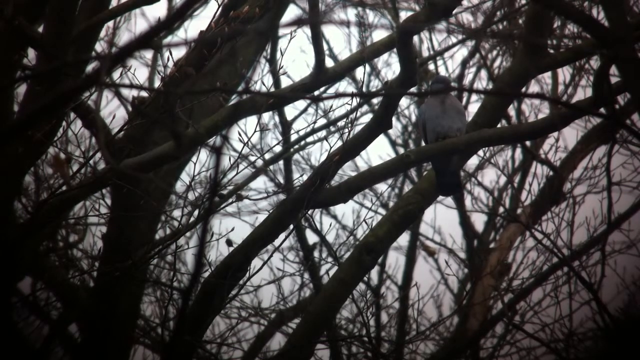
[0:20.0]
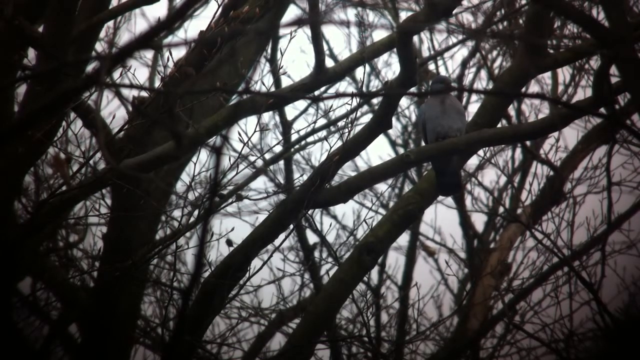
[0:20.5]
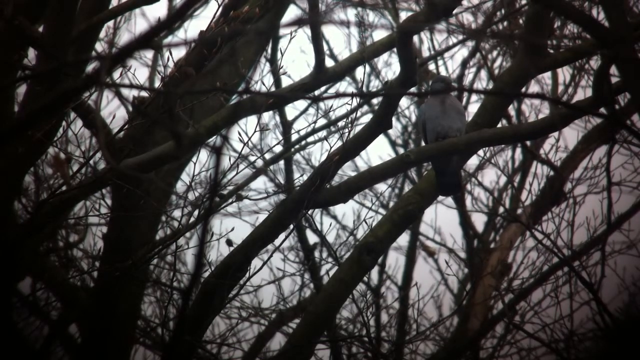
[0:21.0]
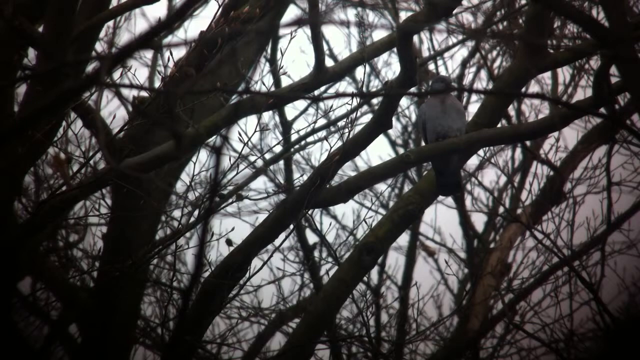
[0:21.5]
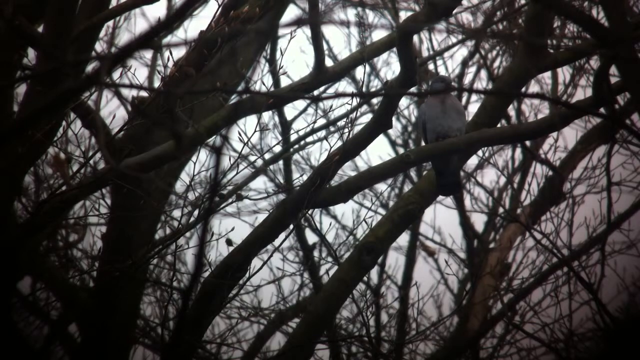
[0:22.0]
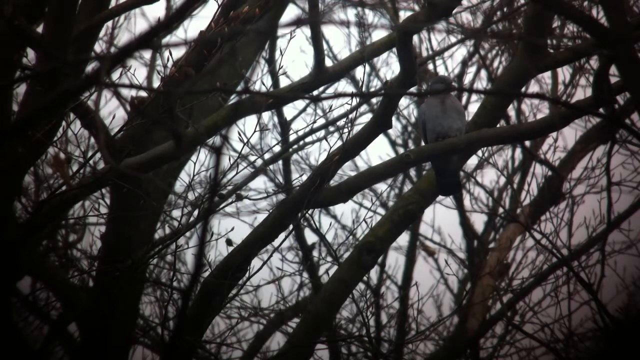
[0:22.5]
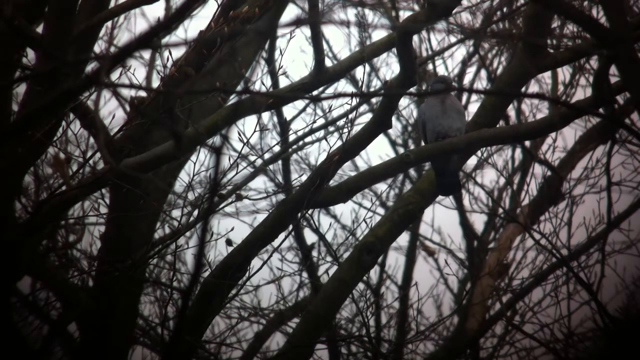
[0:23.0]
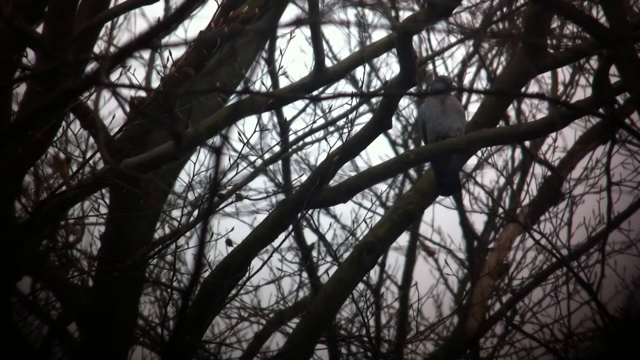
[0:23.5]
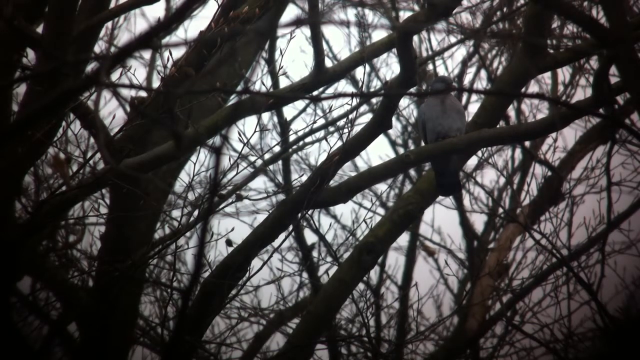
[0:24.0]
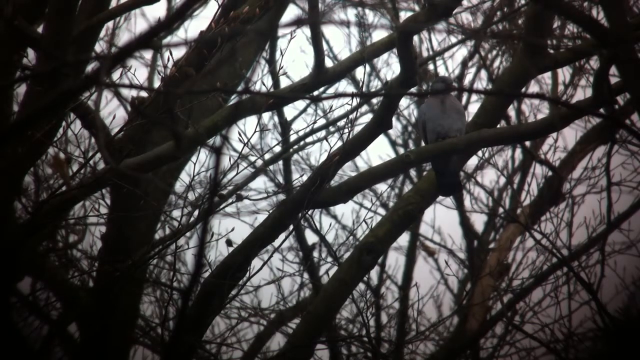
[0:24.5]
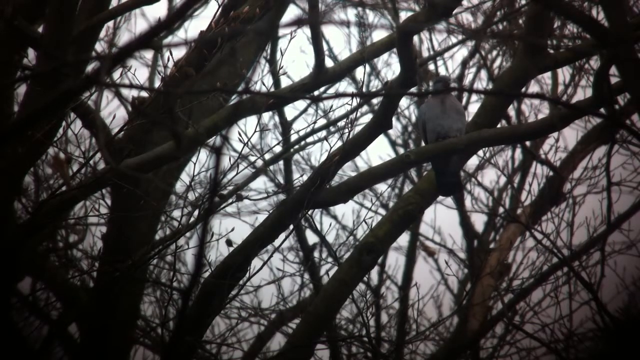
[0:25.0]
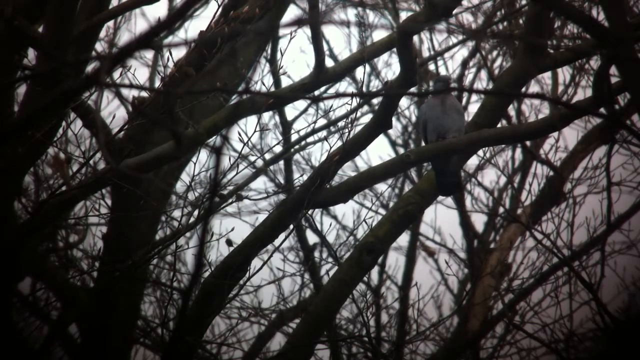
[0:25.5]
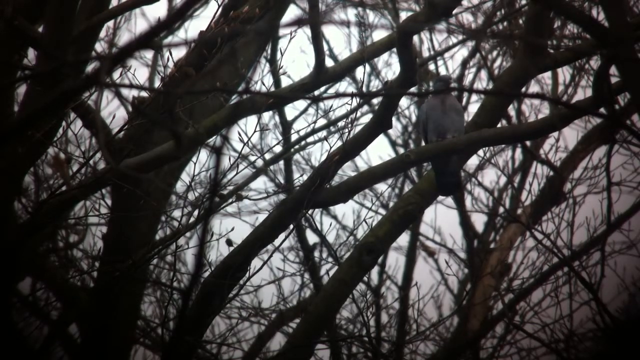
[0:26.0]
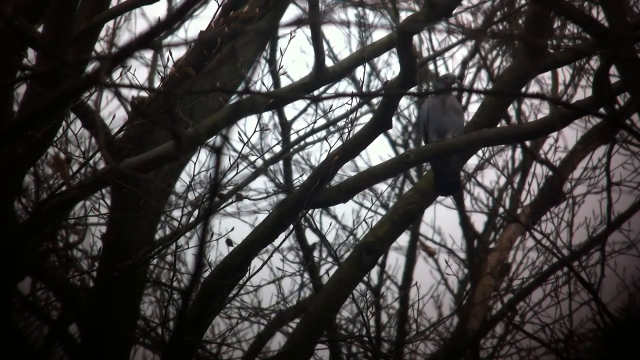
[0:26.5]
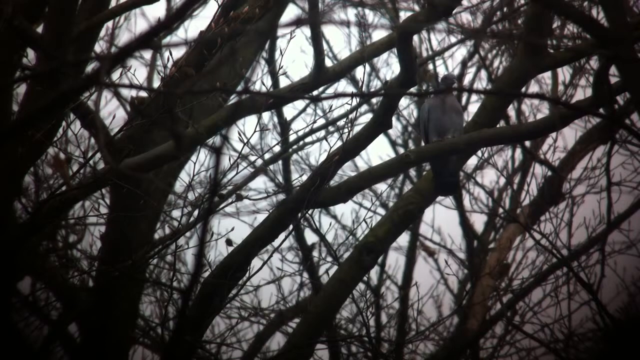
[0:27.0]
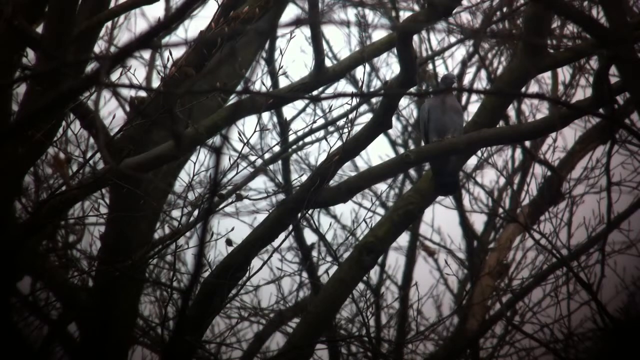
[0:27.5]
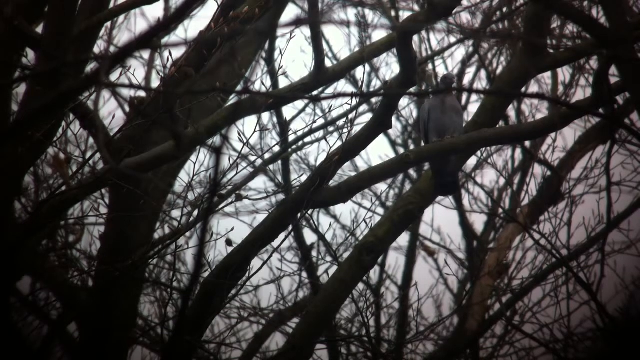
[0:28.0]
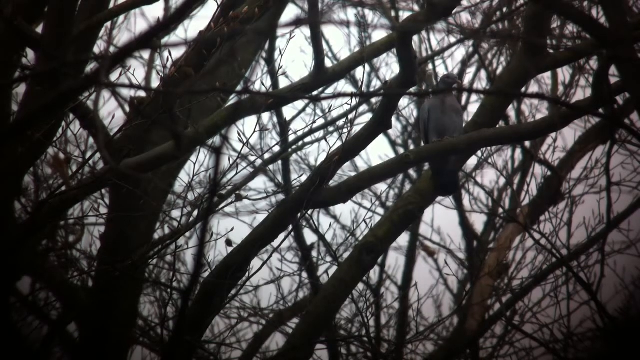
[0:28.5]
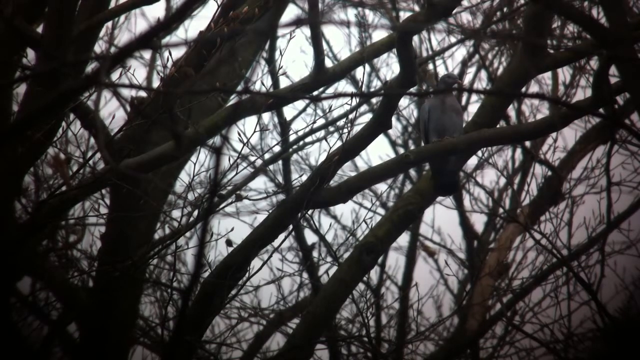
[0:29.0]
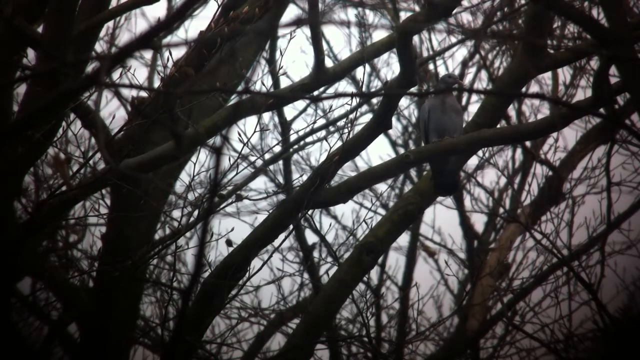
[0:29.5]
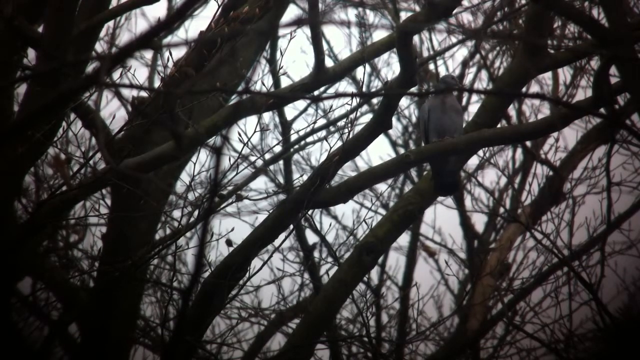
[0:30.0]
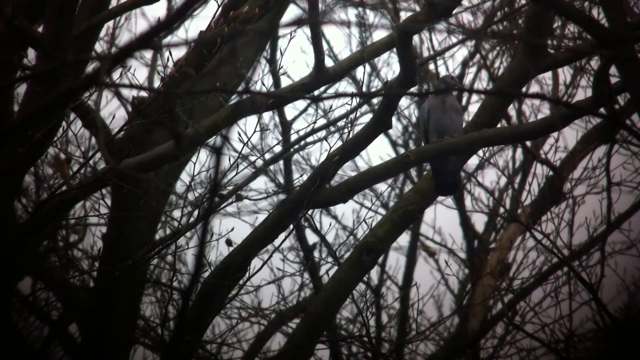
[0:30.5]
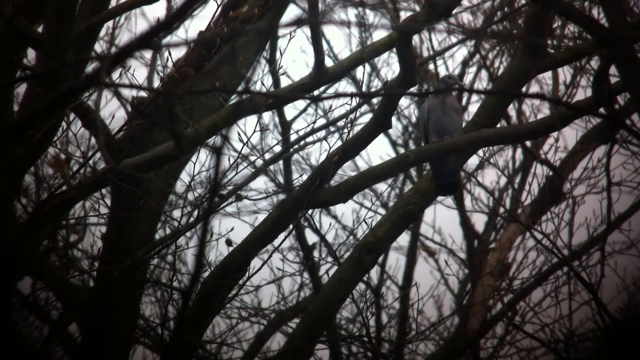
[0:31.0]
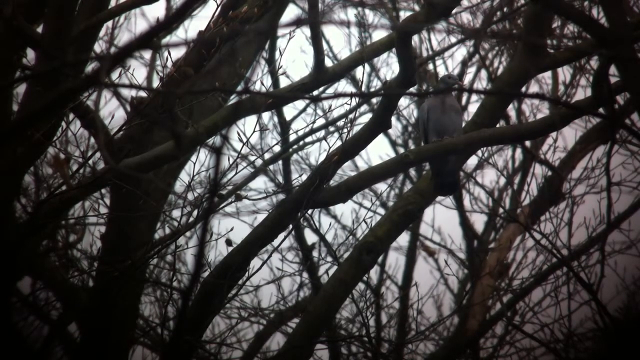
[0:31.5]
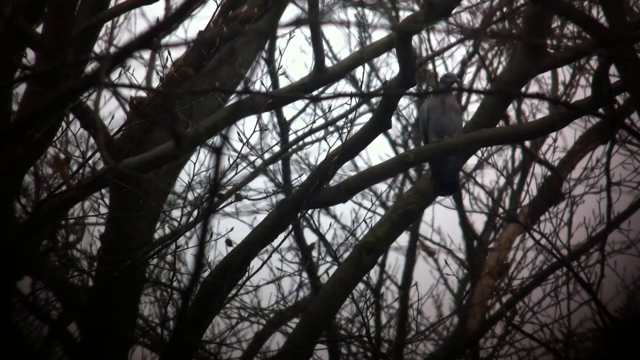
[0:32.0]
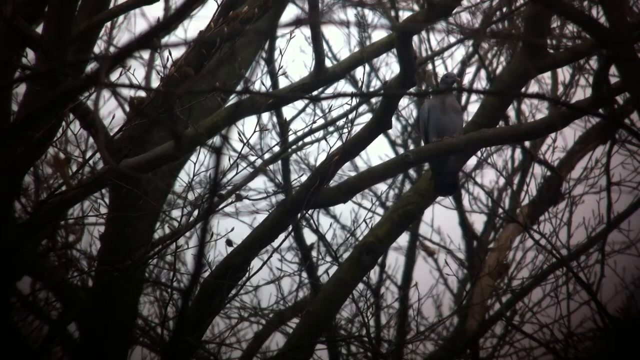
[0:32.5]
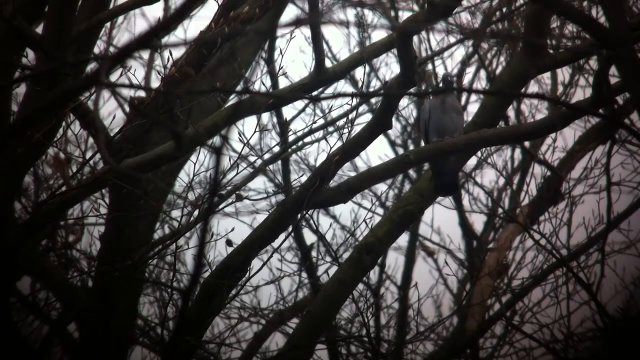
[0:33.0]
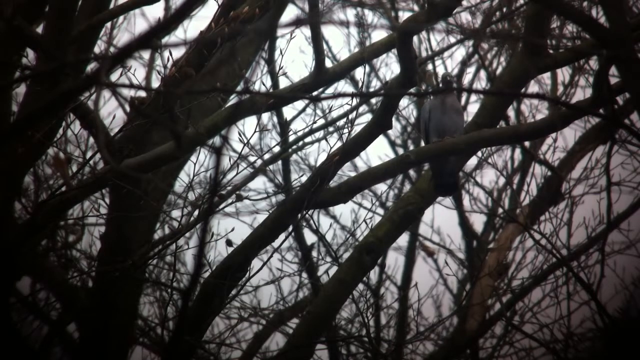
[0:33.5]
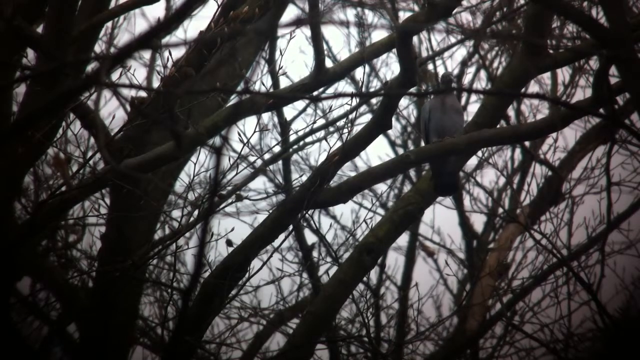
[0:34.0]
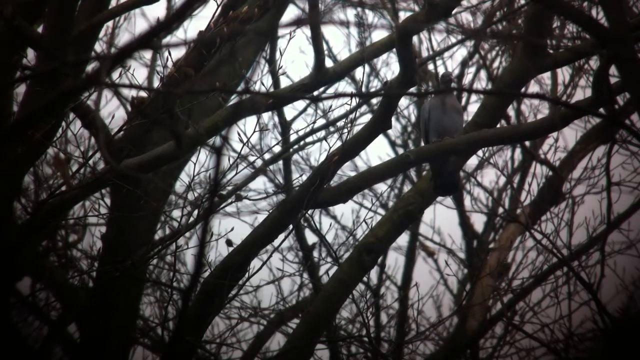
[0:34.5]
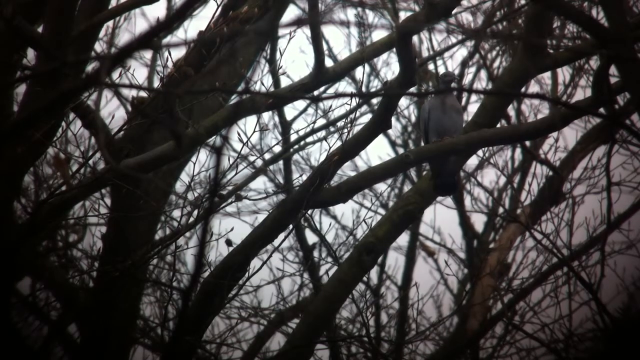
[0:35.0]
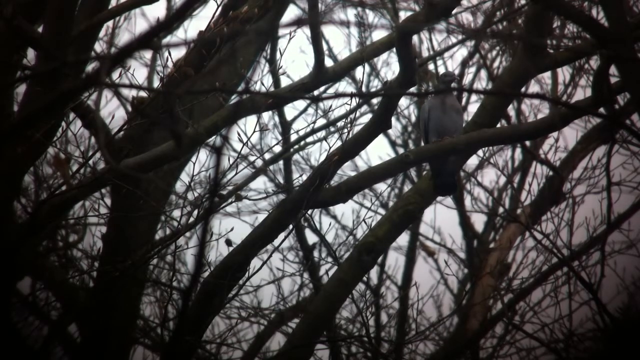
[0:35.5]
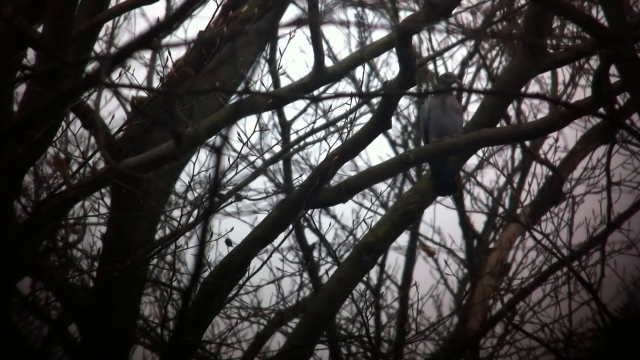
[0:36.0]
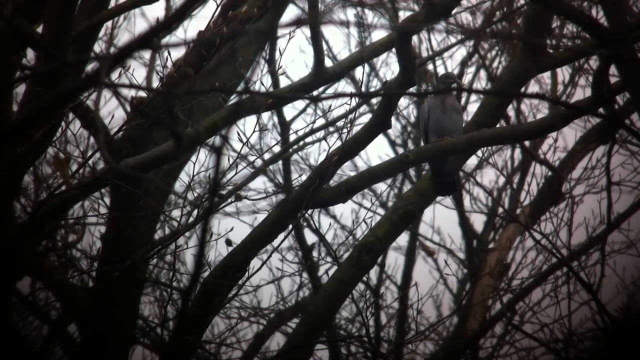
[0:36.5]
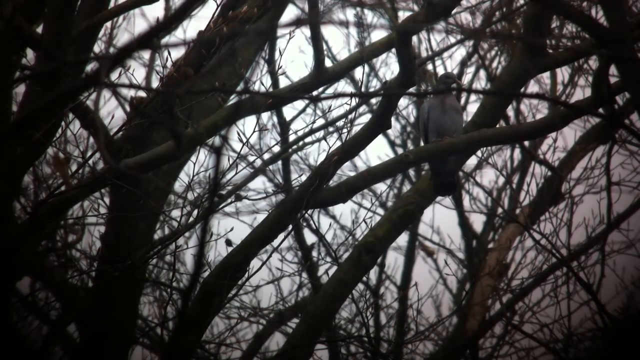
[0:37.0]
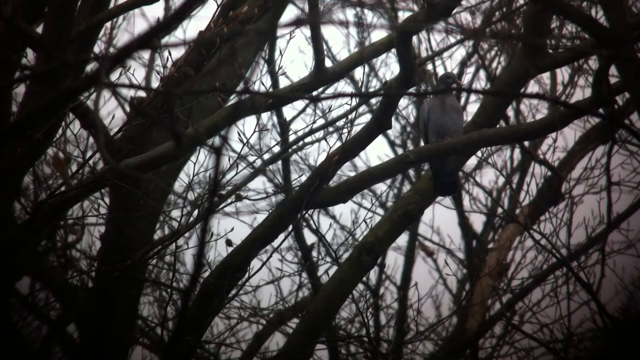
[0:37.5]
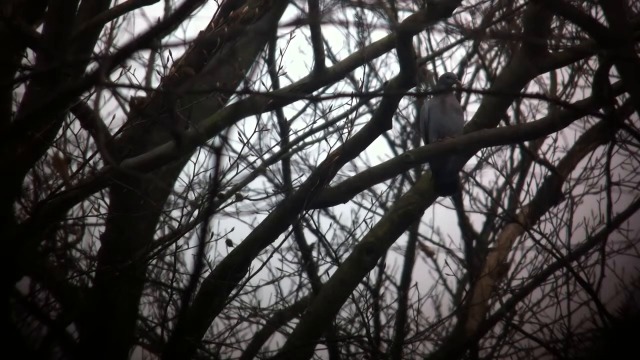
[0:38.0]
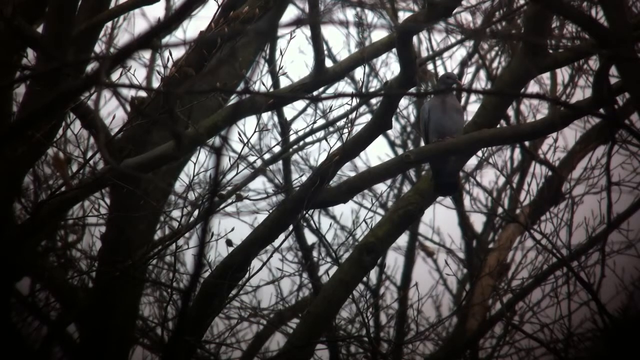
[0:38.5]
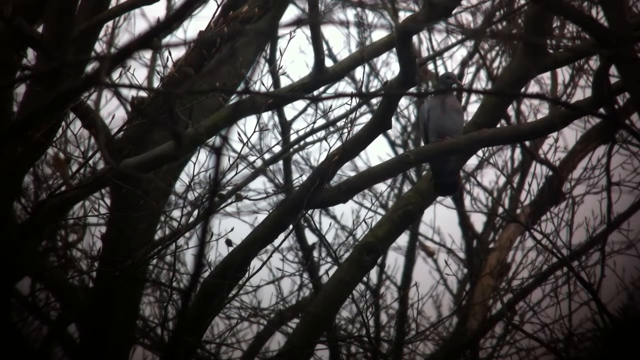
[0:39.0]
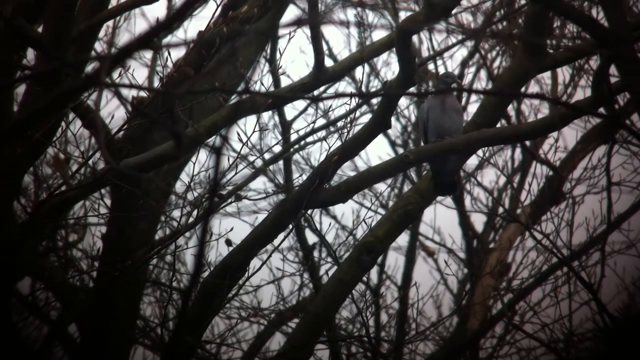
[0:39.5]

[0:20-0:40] The same bird is still shown in the trees, which are completely bare, suggesting wintertime. The bird is pretty high up in the tree and mostly just moves its head a little, looking side to side; otherwise it is barely moving. The background is hard to see and the ground is not visible at all. It looks very foggy with not much light, so the scene looks very dark, like a cold, rainy day, though it is not raining. The bird possibly is a pigeon. It has a gray belly and a darker head, its beak also looks darker, and its tail feathers look a little darker as well.